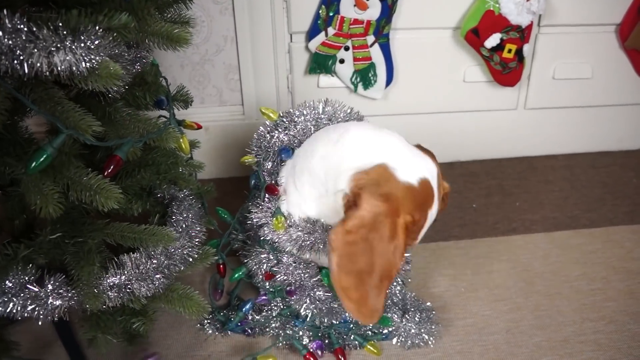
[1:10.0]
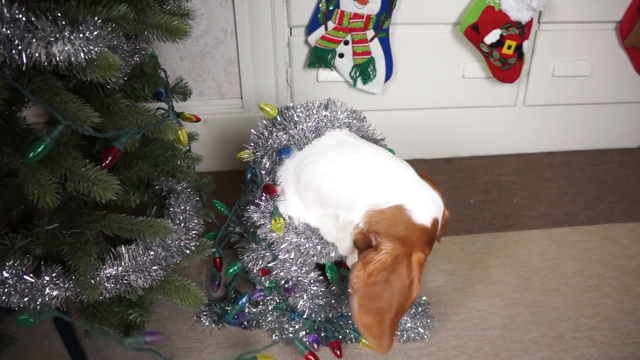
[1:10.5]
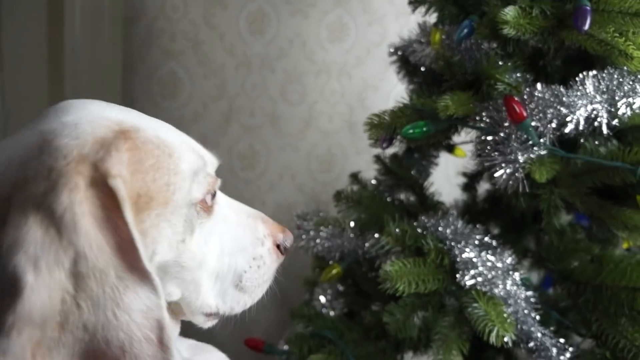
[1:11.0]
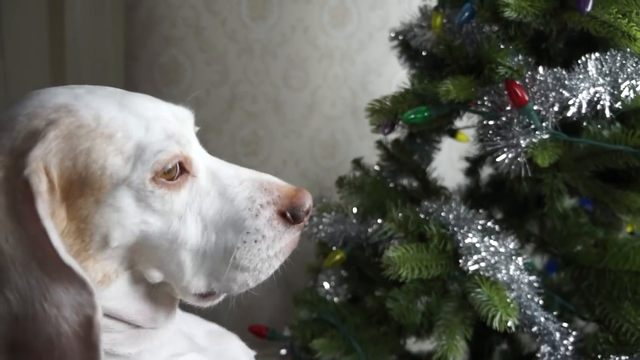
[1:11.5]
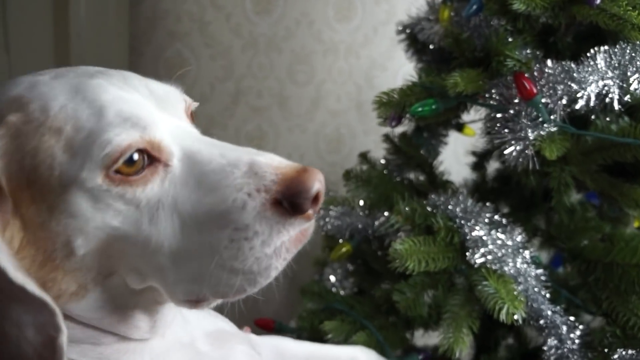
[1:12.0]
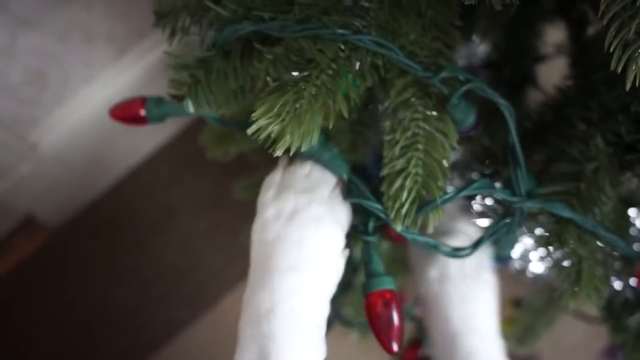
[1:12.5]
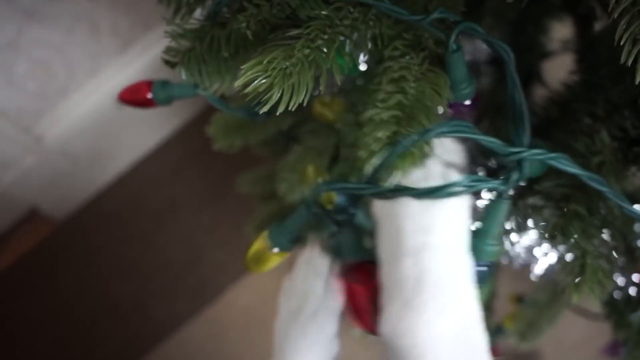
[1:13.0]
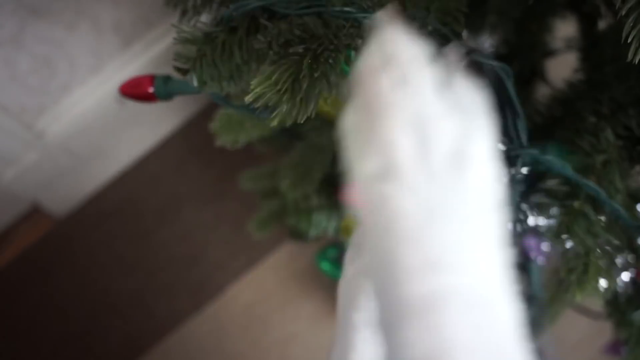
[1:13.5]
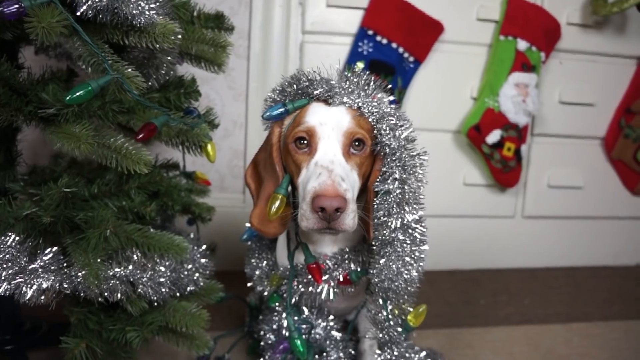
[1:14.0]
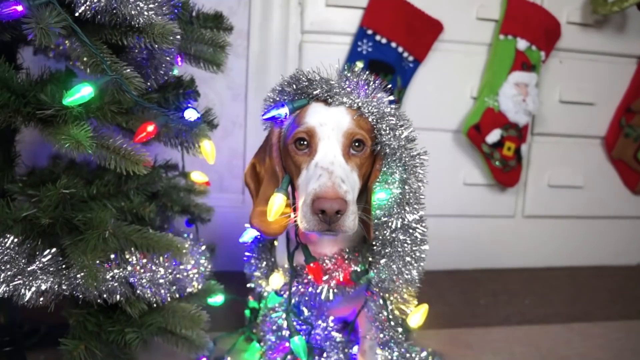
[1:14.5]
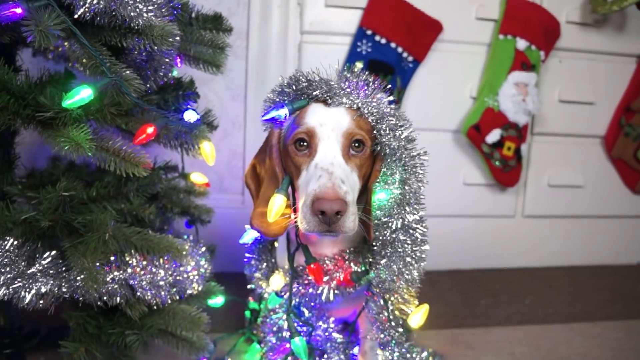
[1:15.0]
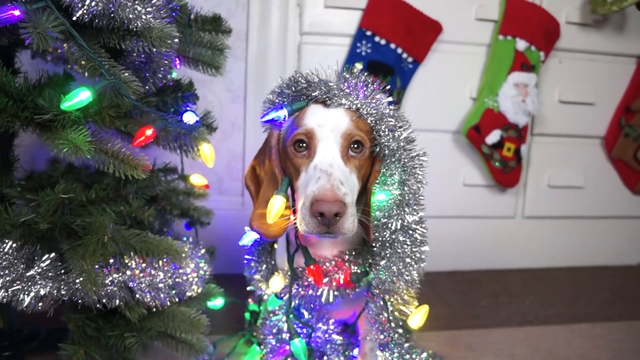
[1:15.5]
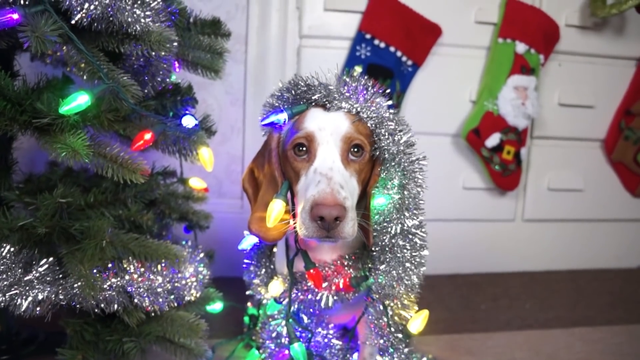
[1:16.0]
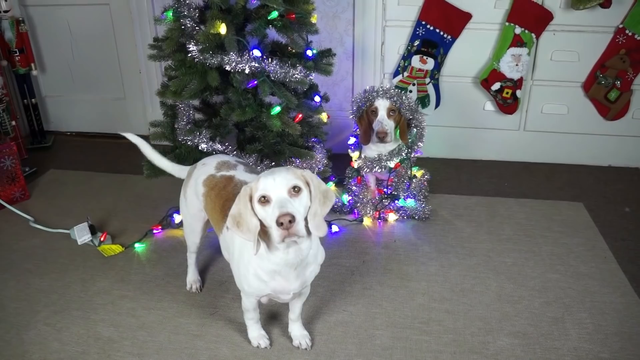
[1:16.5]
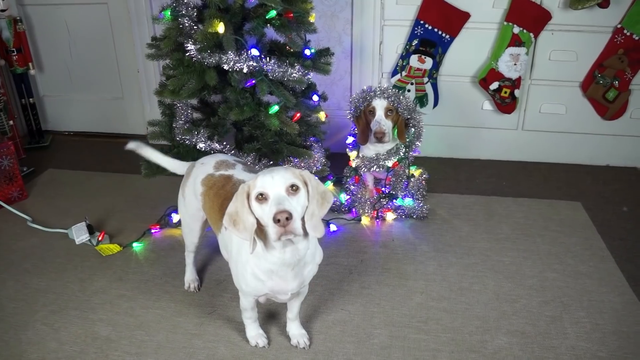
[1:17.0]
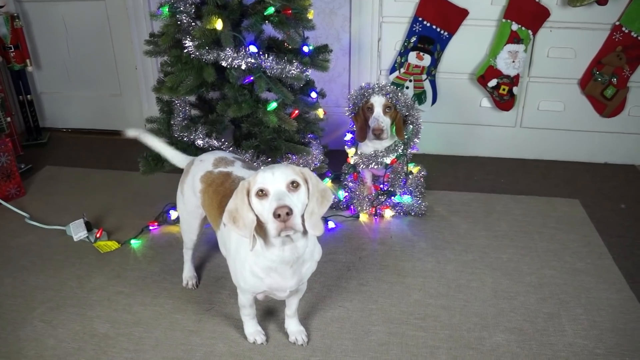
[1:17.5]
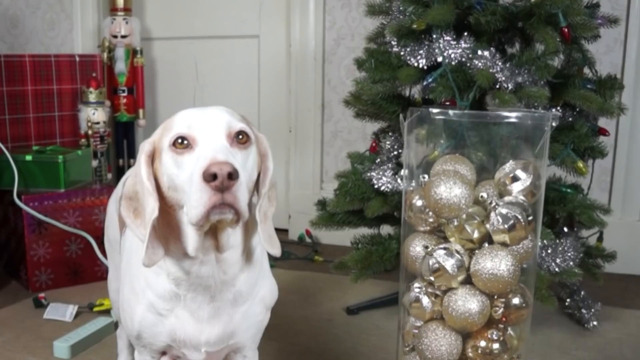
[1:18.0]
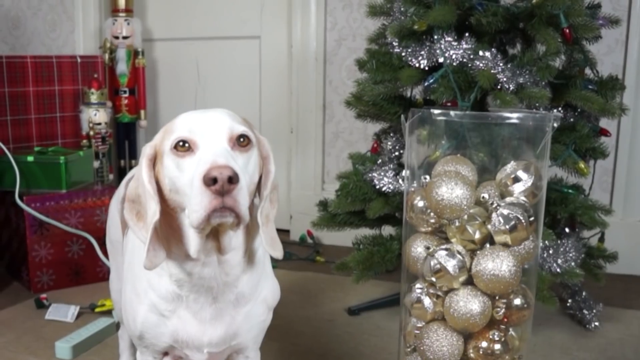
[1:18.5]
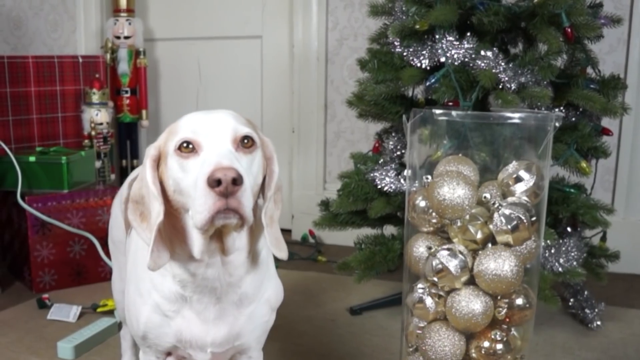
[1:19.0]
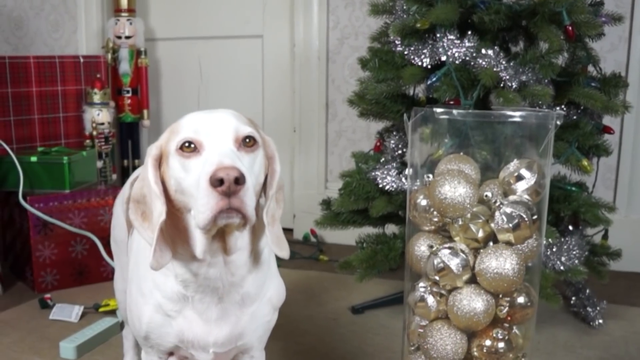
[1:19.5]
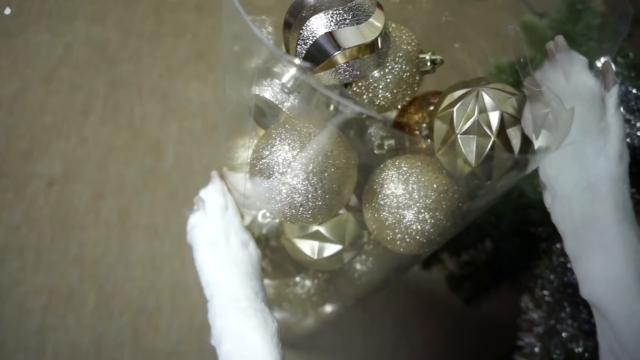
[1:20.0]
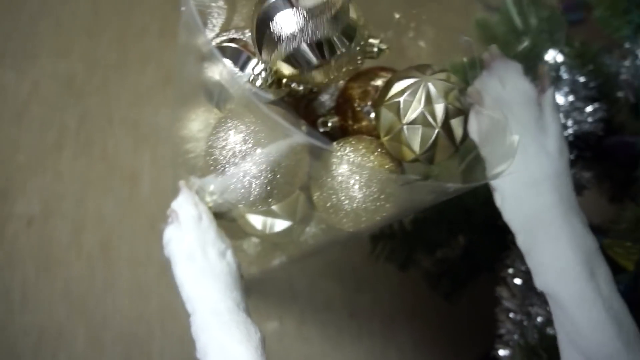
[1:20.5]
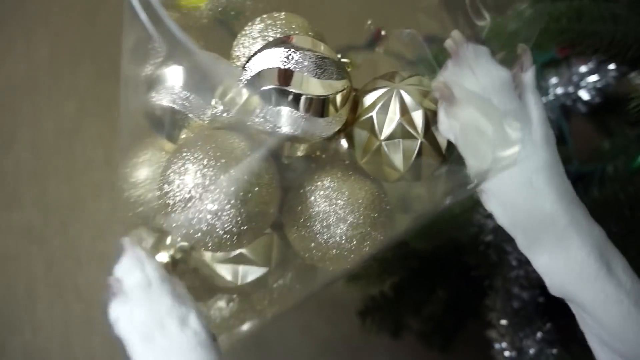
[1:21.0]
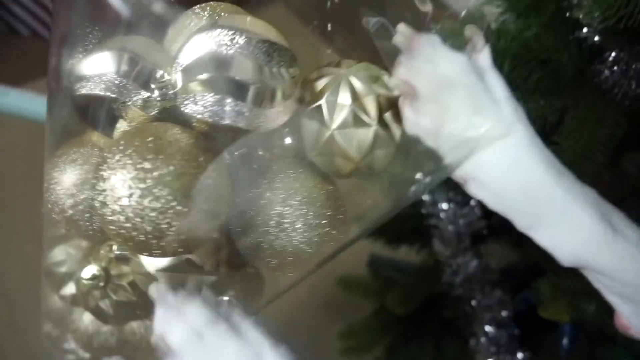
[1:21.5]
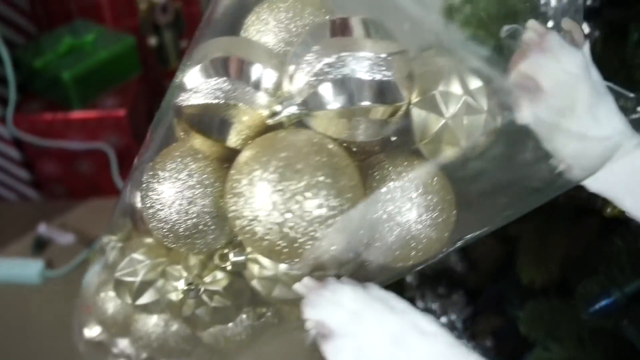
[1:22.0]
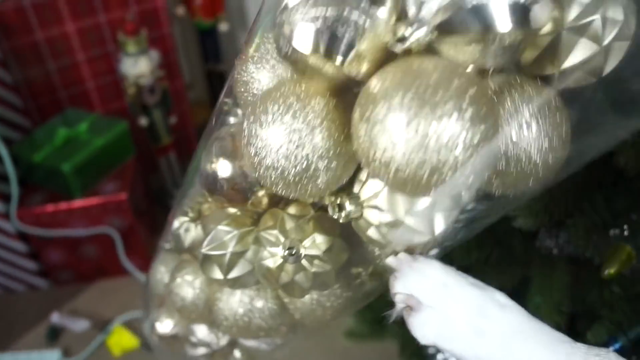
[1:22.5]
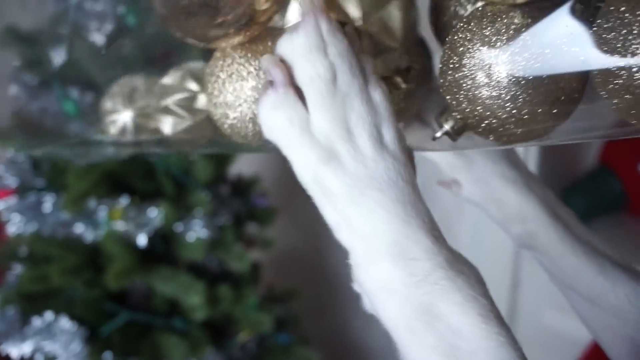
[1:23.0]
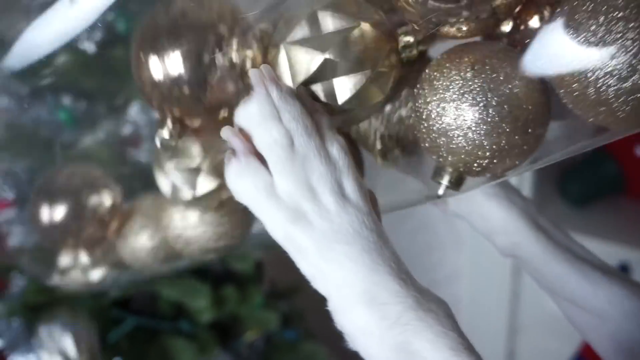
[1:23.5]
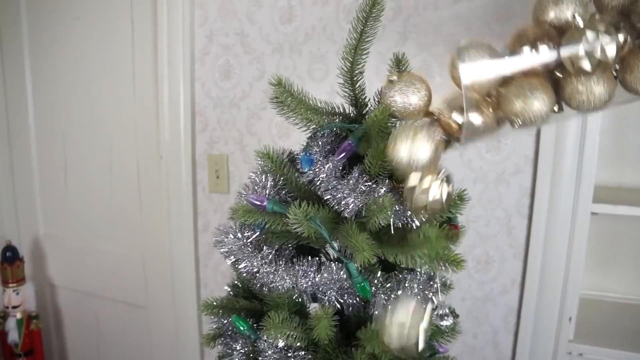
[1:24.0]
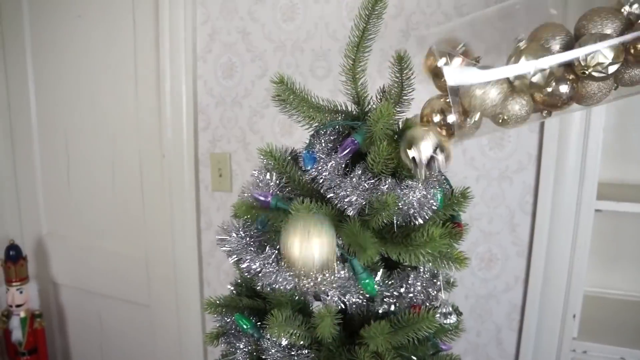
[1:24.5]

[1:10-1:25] The dog wrapped in silver tinsel and lights is lit up once the lights are plugged in, and the tree and the dog glow with Christmas lights around its body. There is a whole case of gold Christmas baubles, and the dog uses both paws to drop and pour the gold baubles over the top of the tree. The decorating dog wags its tail excitedly as it continues decorating, while the second dog is covered in silver tinsel and lit Christmas lights.